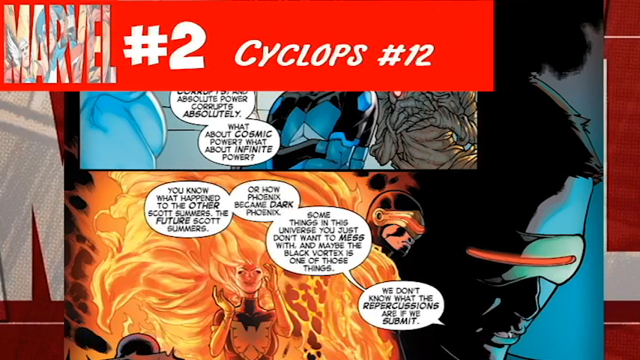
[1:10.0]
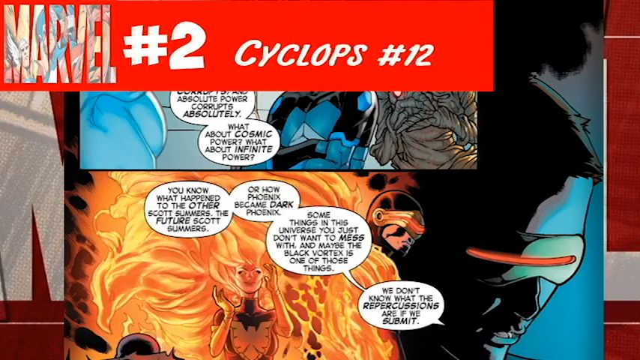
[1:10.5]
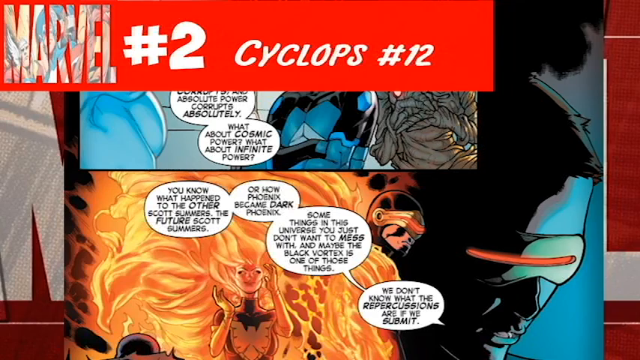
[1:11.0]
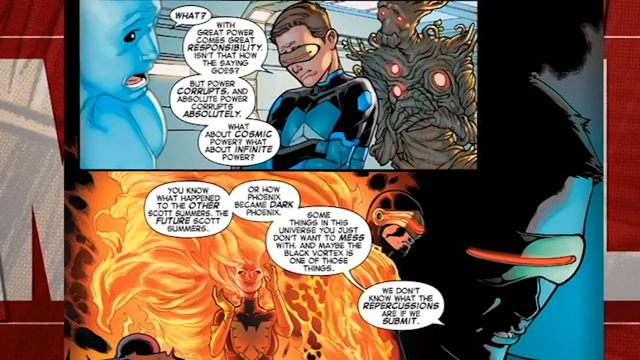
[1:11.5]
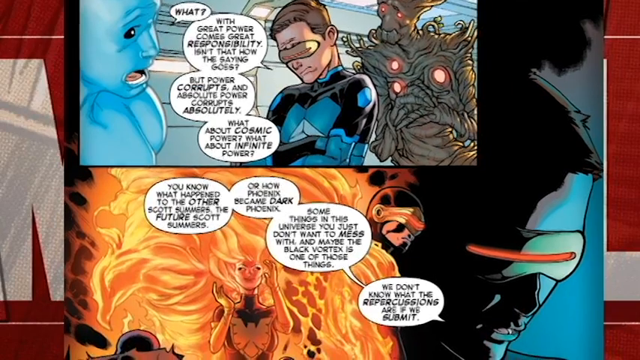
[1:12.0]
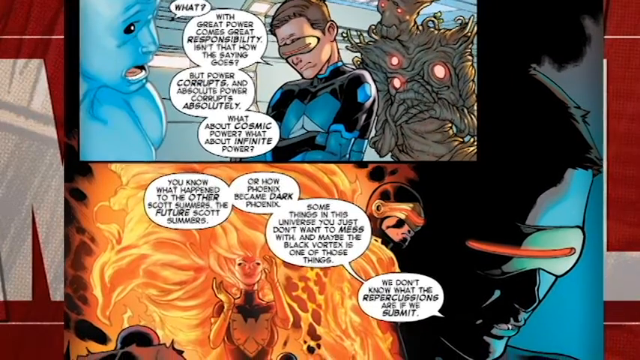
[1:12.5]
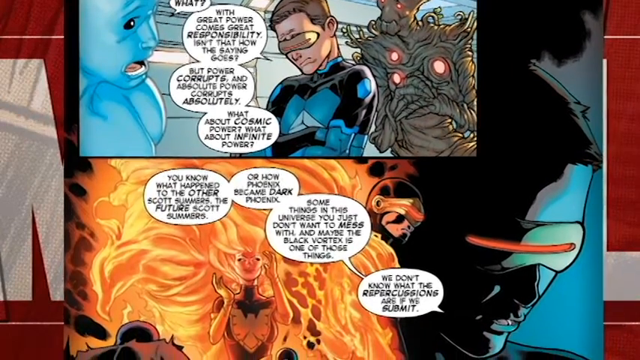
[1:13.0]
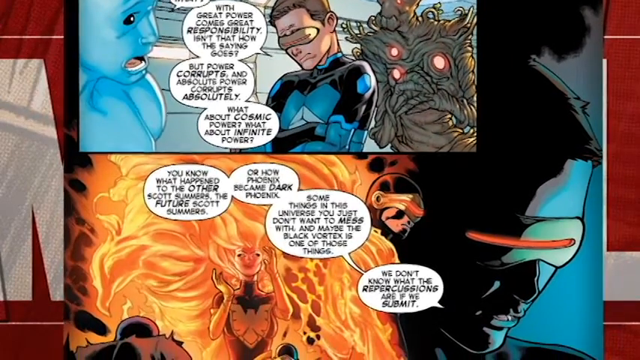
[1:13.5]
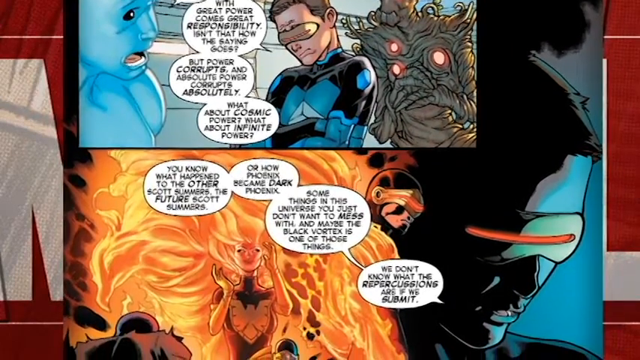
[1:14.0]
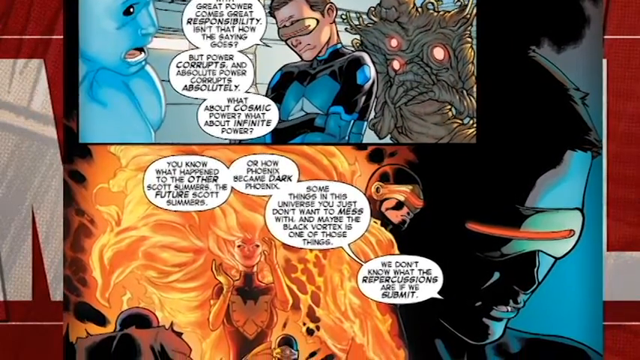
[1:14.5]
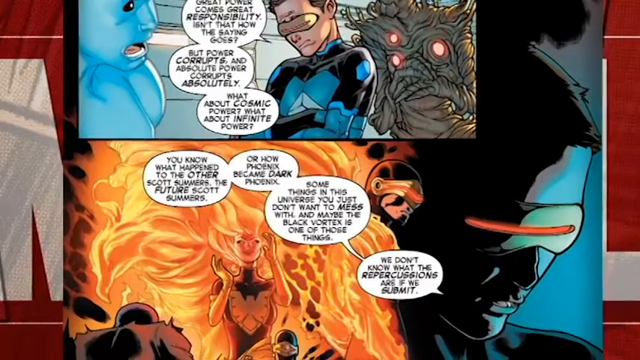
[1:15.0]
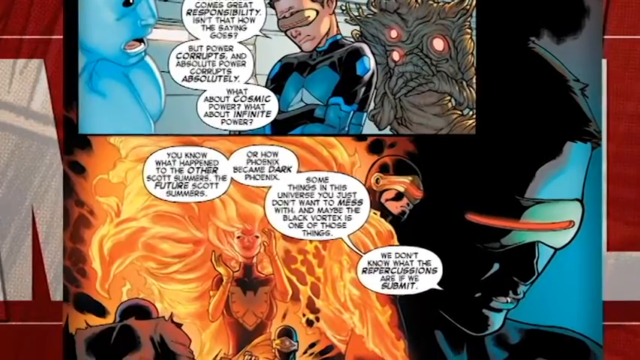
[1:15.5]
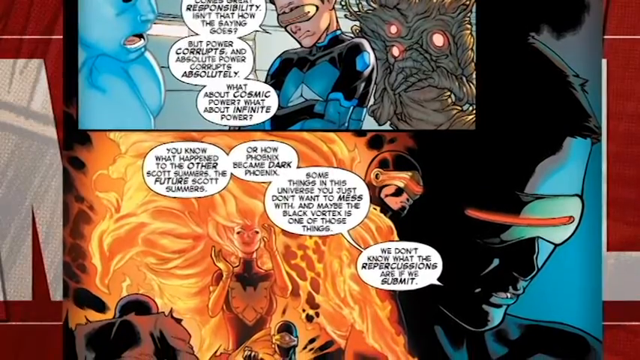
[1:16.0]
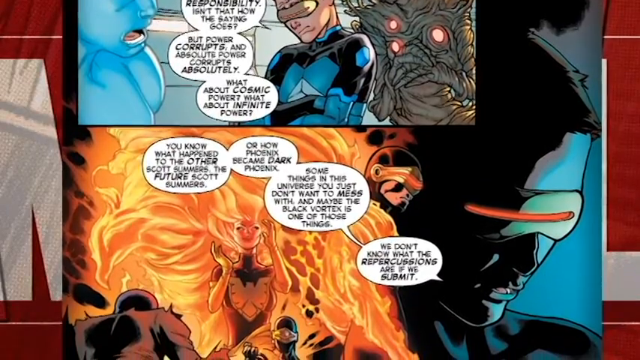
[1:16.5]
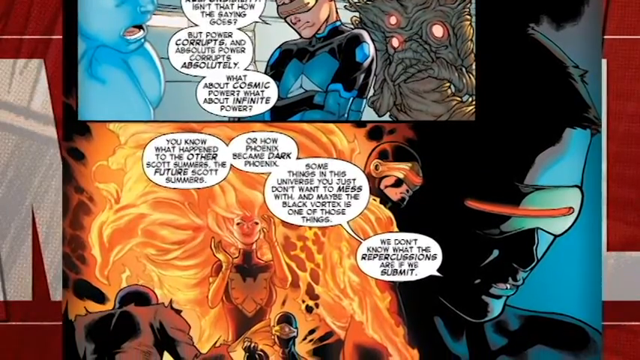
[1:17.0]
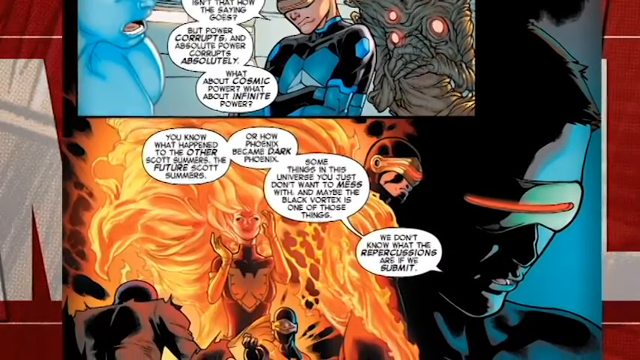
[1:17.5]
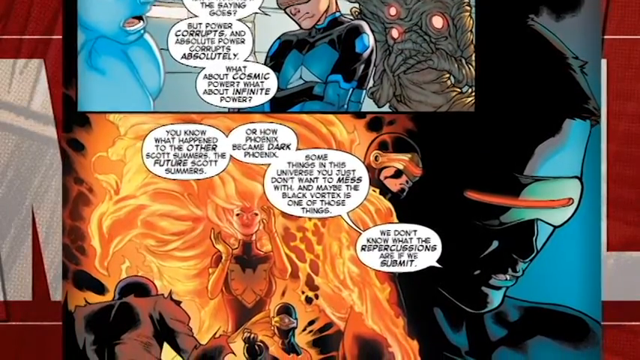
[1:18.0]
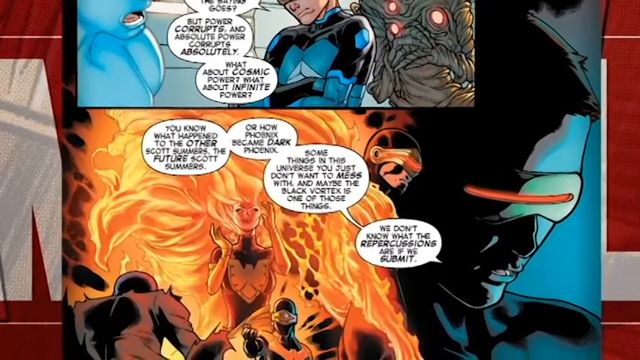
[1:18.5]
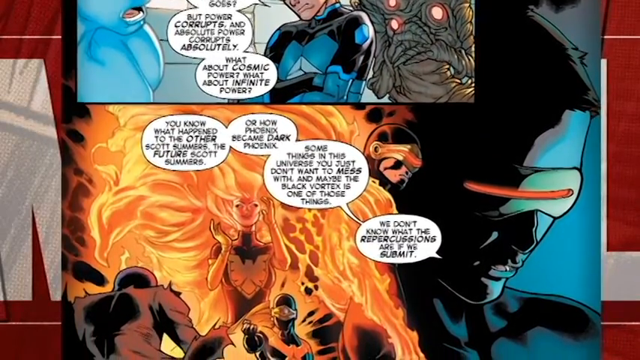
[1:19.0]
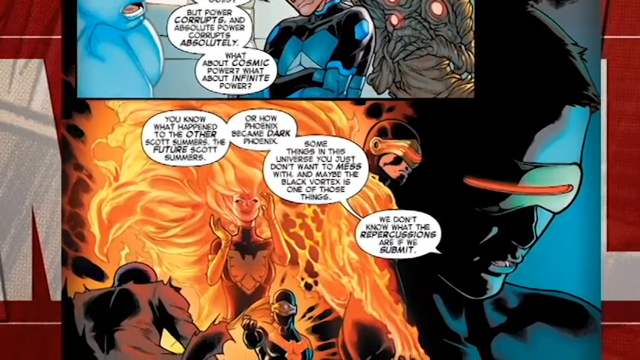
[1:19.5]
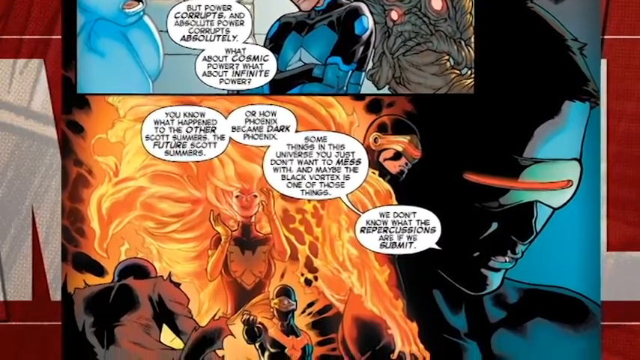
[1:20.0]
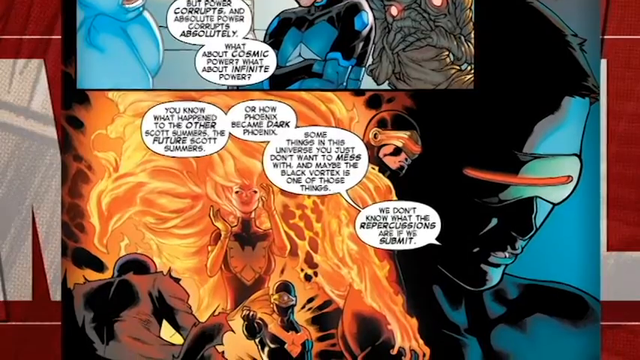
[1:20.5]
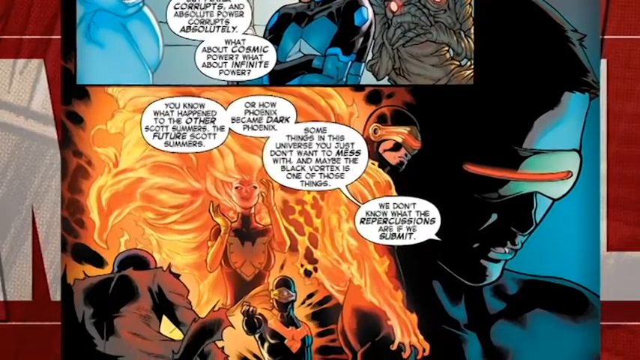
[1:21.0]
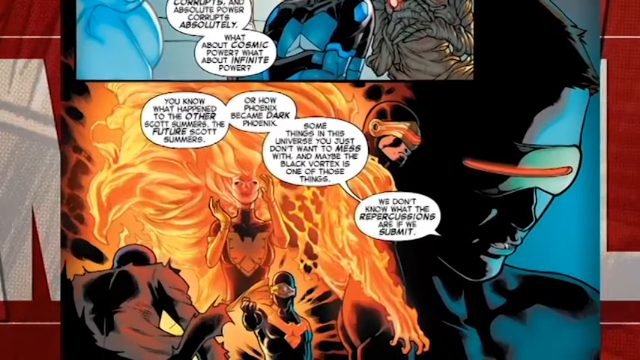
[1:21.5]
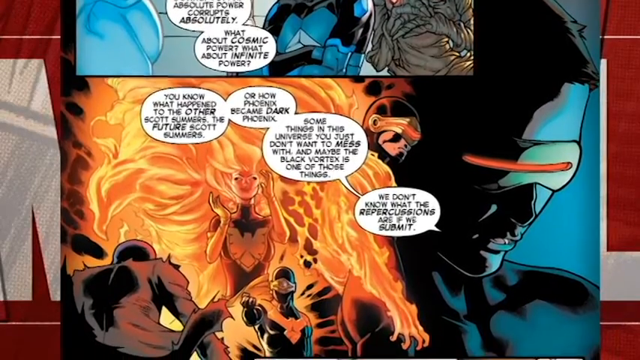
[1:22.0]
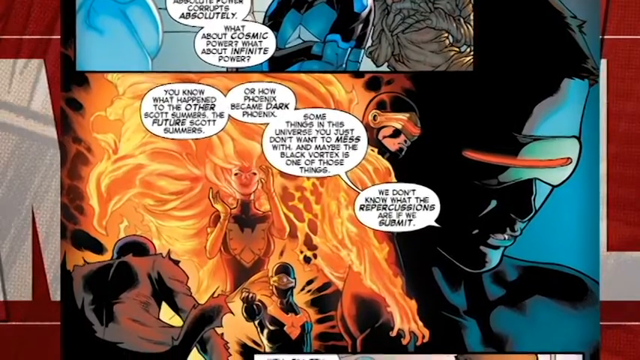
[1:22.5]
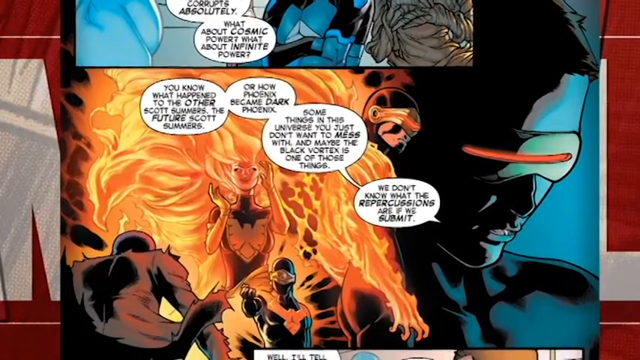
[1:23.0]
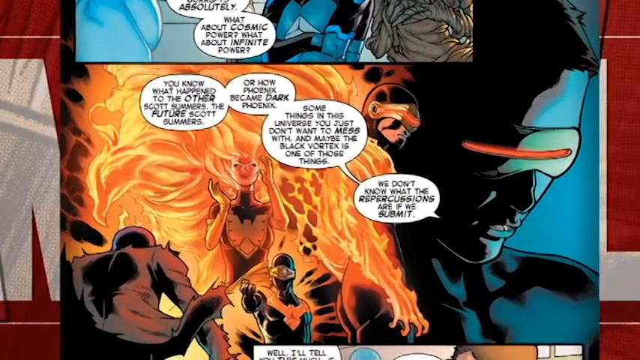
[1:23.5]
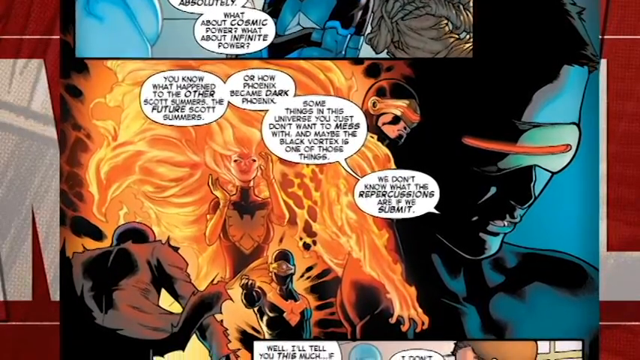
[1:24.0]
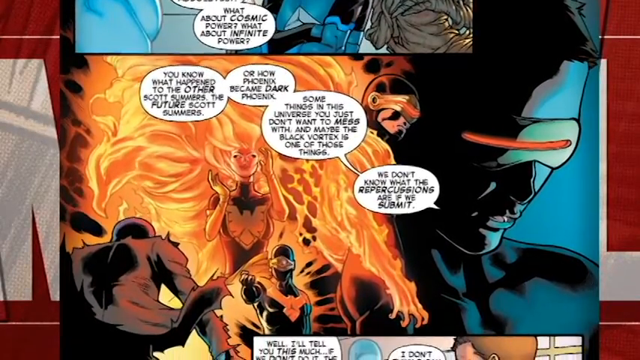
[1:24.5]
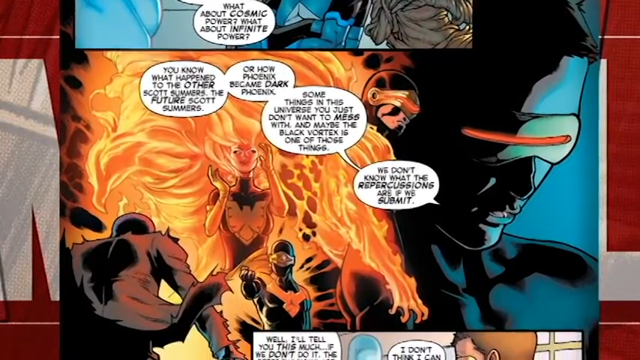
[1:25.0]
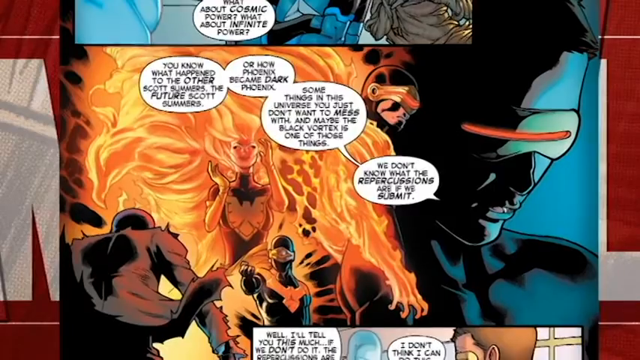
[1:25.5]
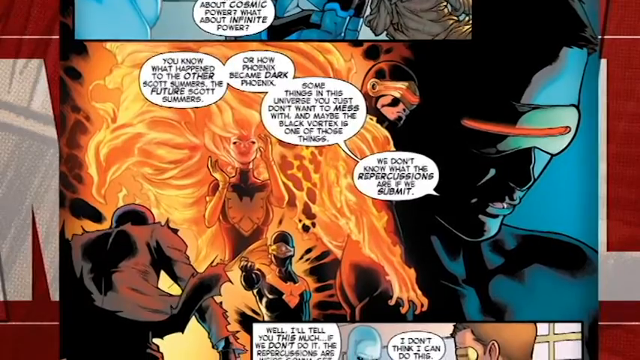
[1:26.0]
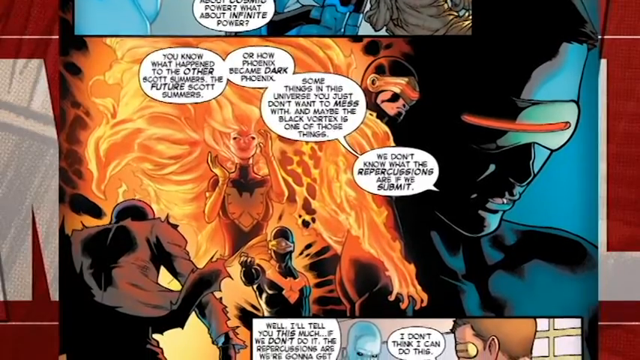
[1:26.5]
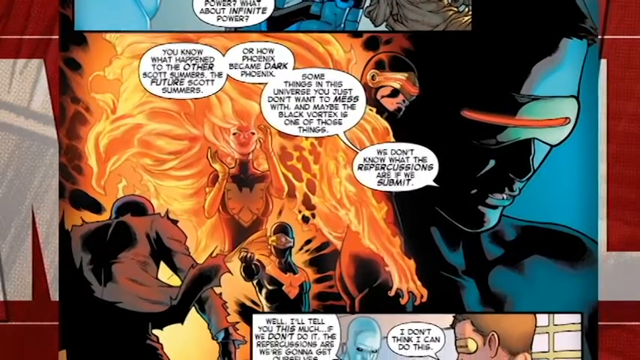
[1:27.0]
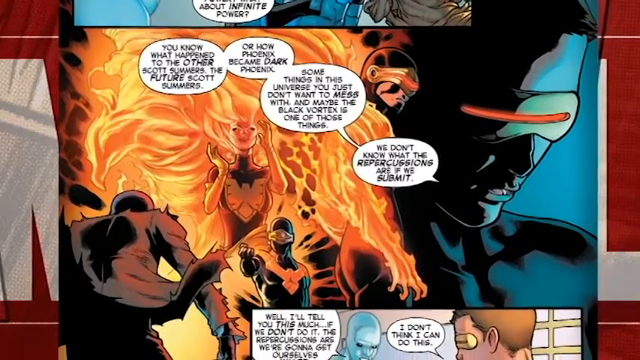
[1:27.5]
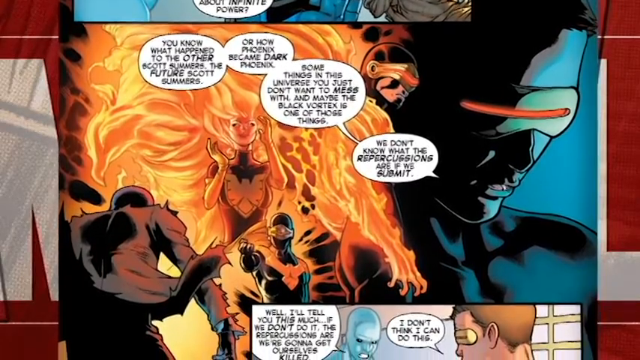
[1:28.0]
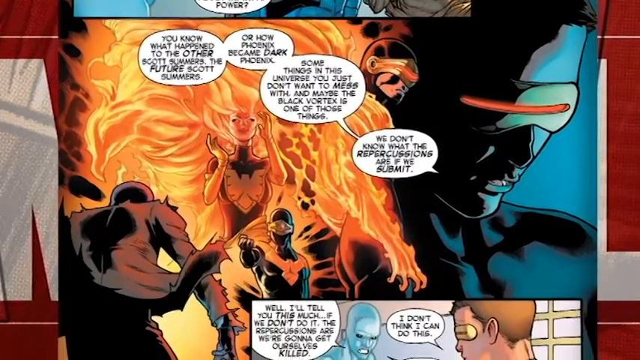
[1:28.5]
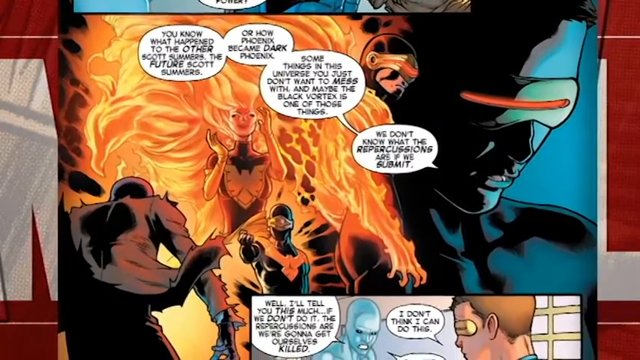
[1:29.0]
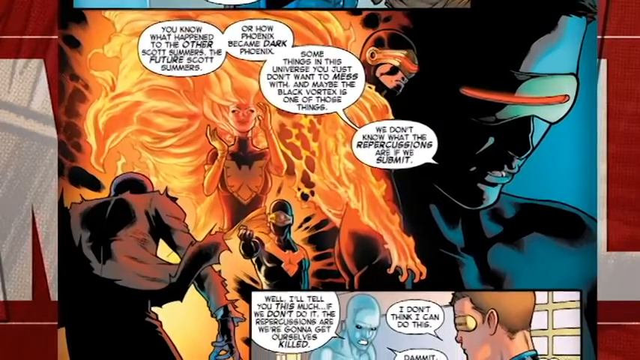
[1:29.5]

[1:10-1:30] The next entry is "Marvel No. 2 Cyclops No. 12." Rather than being static and only zooming in, this one moves from the top of the page to the bottom. The panels are unevenly divided: one small panel in the upper left corner, a large overall panel, and one additional panel in the lower right corner. The upper left panel shows three people: one in a full body suit in blue and black with some sort of mask, a totally blue person, and a person who looks a little like tree-like roots. The large middle panel apparently shows the same person who is in the middle of the upper left panel in the background, along with a large portion of some sort of fire-wielding person and a lot of speech bubbles.